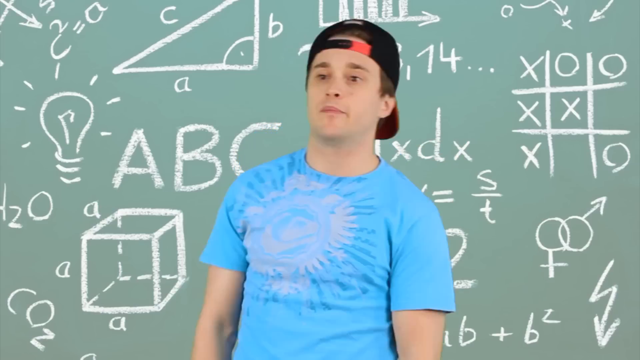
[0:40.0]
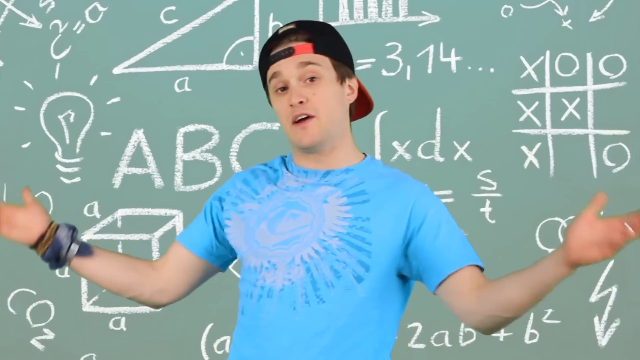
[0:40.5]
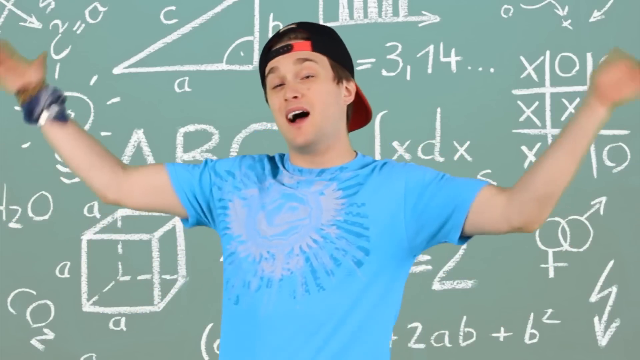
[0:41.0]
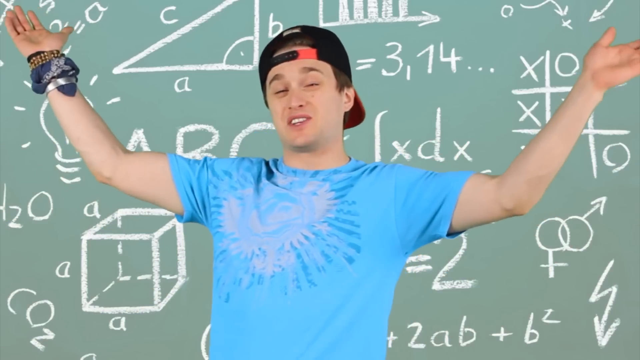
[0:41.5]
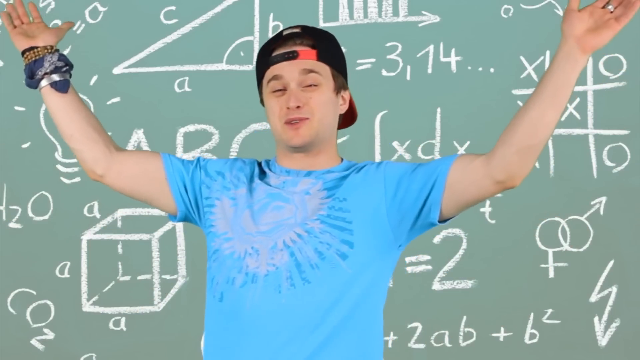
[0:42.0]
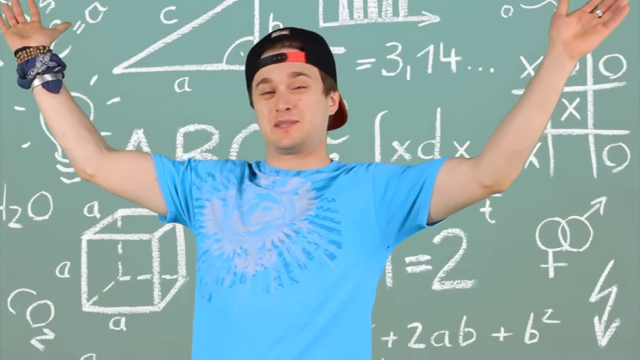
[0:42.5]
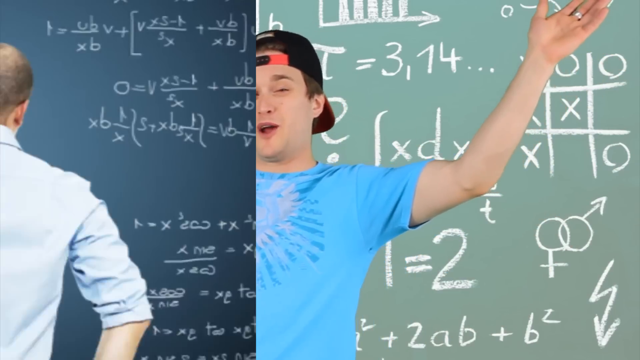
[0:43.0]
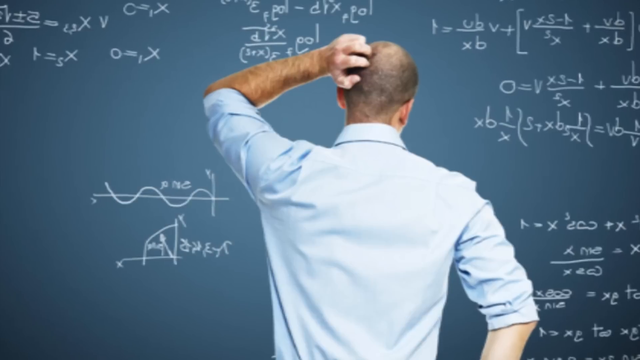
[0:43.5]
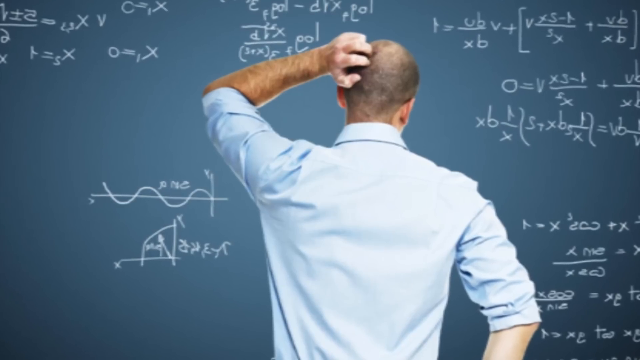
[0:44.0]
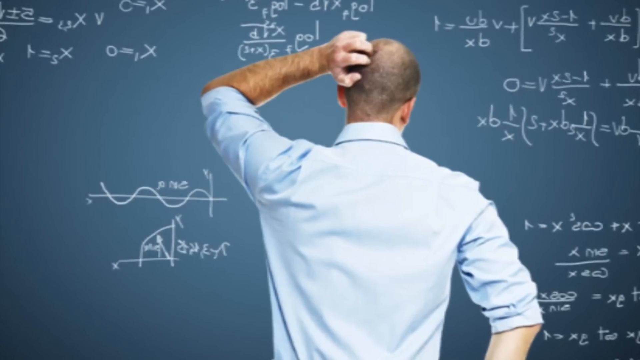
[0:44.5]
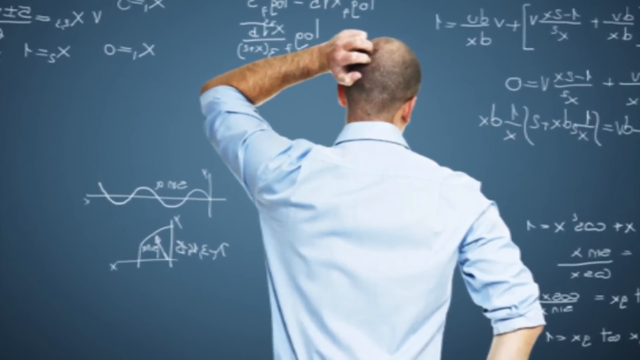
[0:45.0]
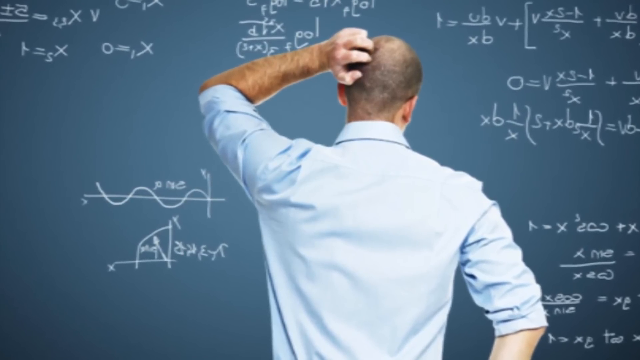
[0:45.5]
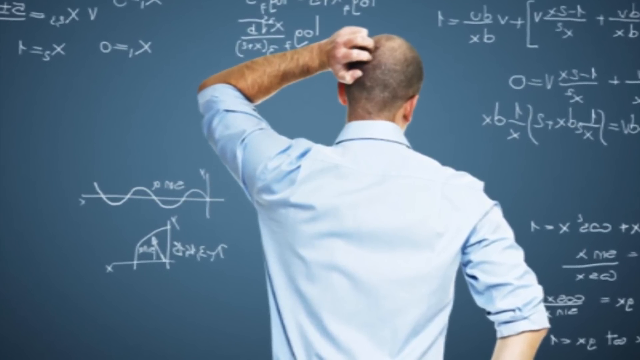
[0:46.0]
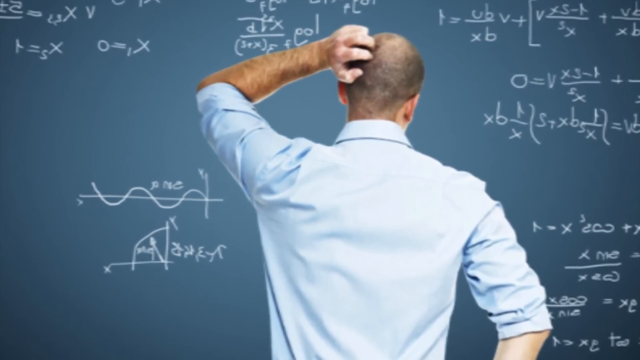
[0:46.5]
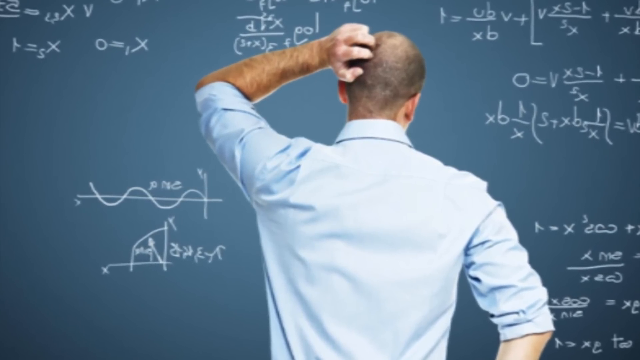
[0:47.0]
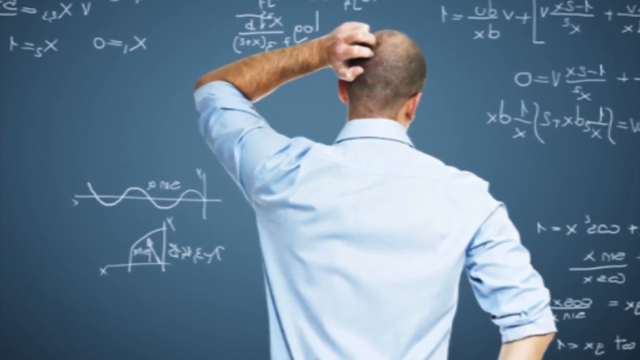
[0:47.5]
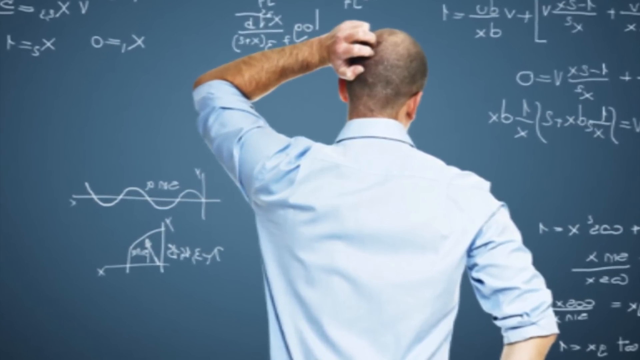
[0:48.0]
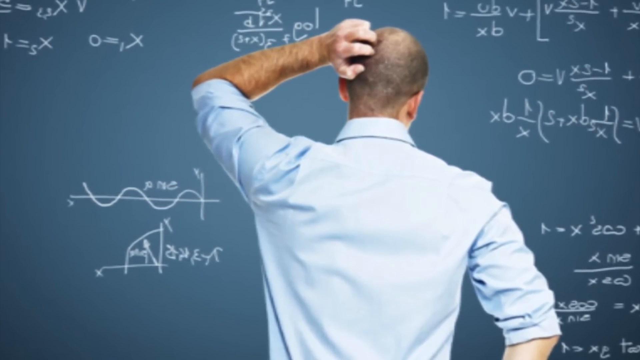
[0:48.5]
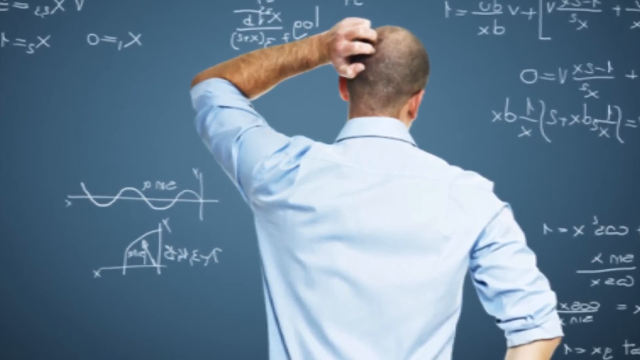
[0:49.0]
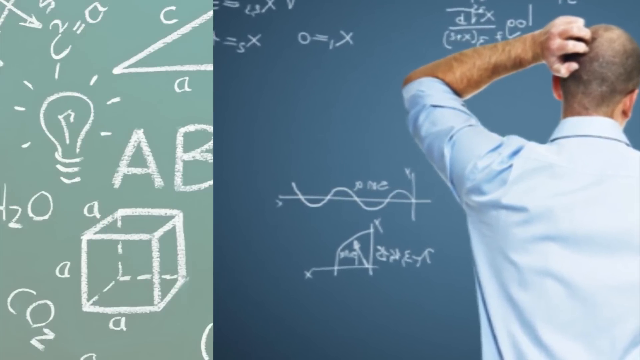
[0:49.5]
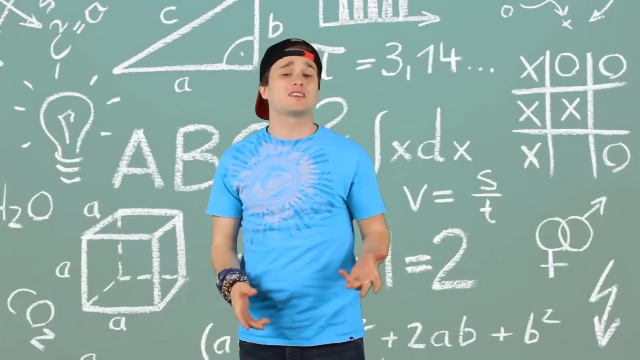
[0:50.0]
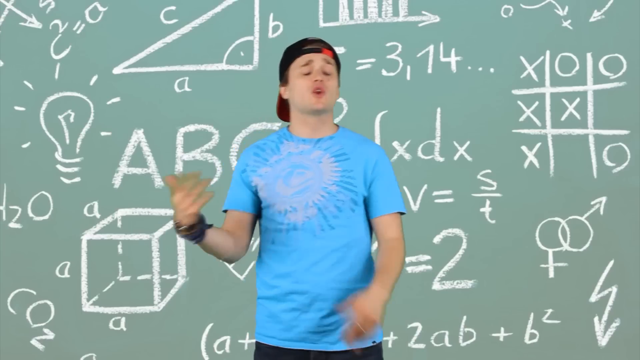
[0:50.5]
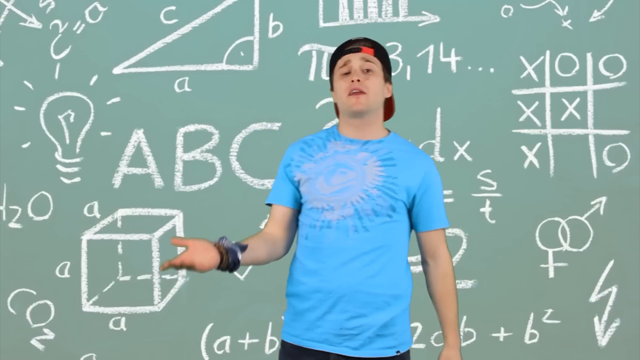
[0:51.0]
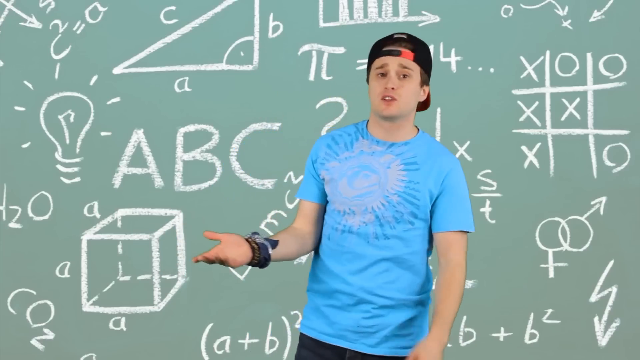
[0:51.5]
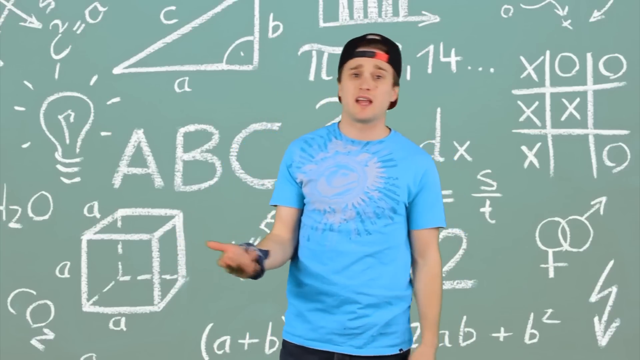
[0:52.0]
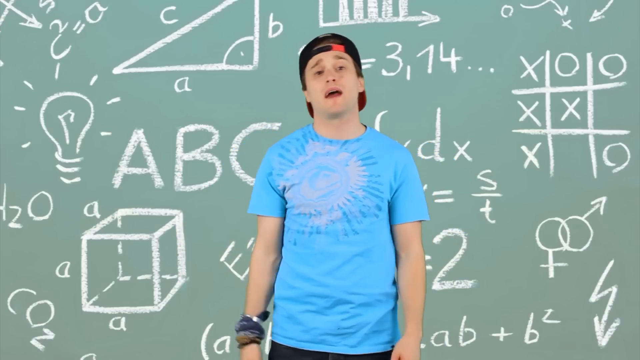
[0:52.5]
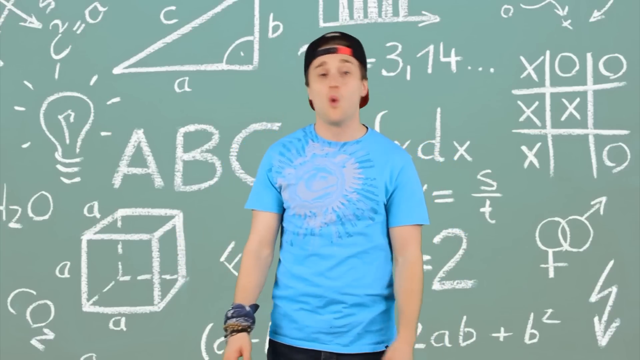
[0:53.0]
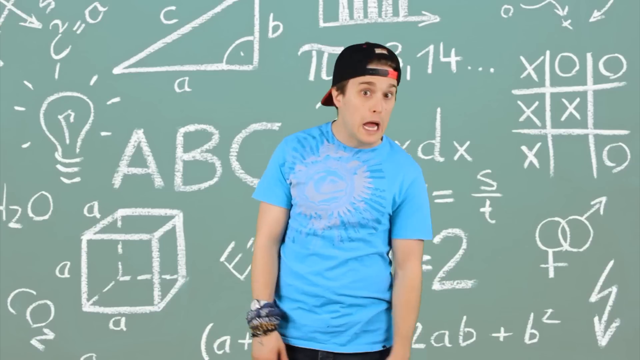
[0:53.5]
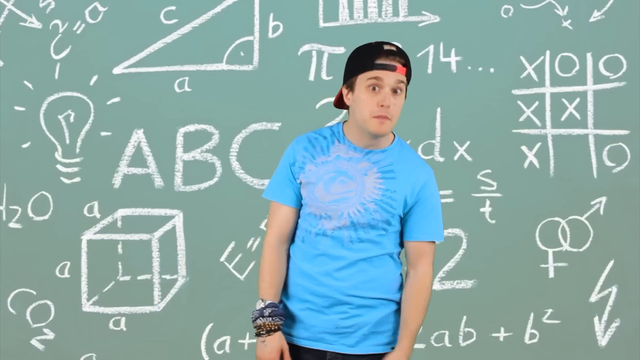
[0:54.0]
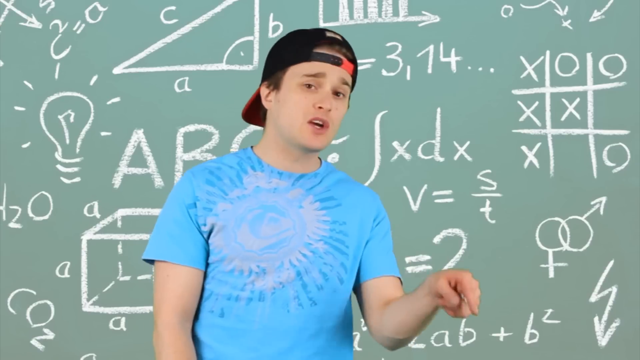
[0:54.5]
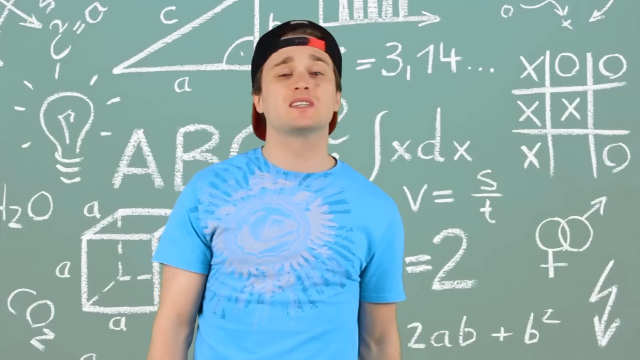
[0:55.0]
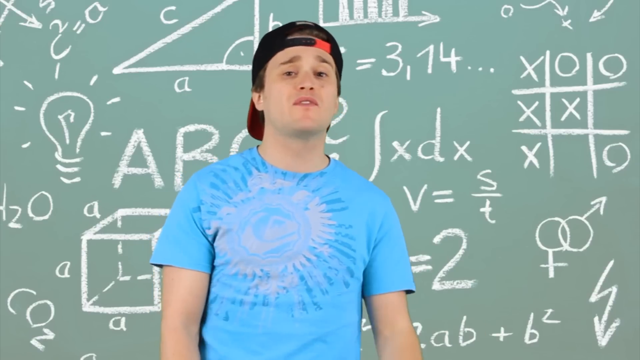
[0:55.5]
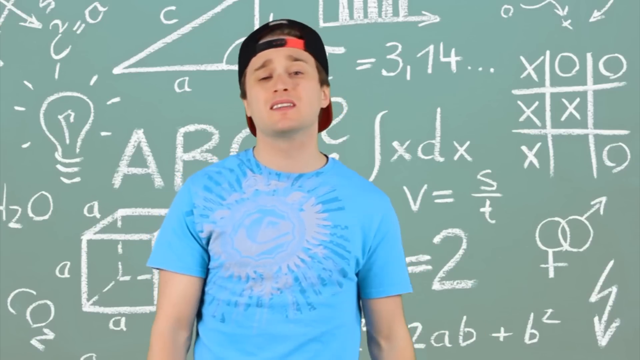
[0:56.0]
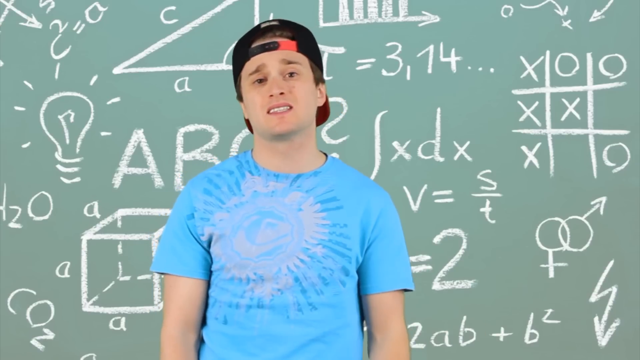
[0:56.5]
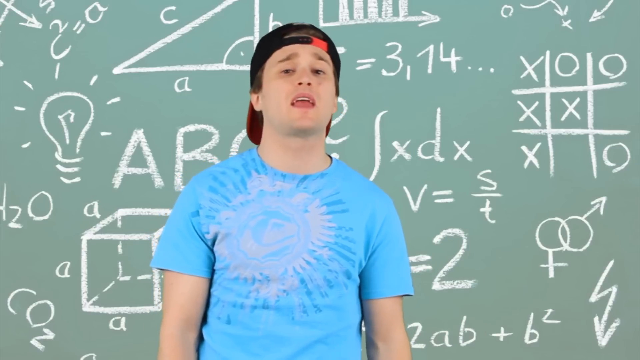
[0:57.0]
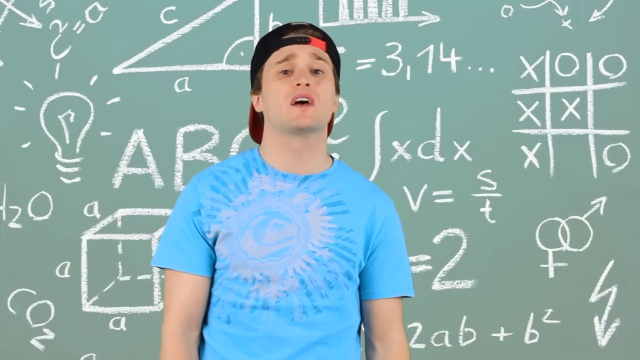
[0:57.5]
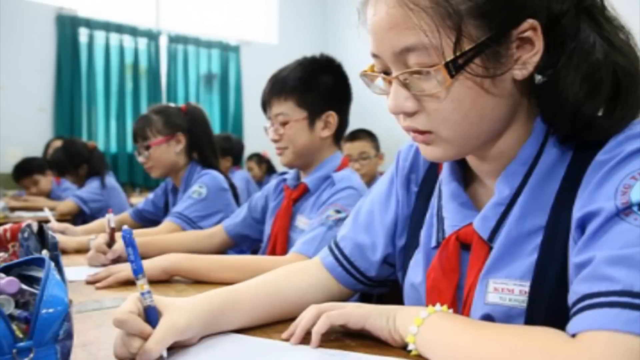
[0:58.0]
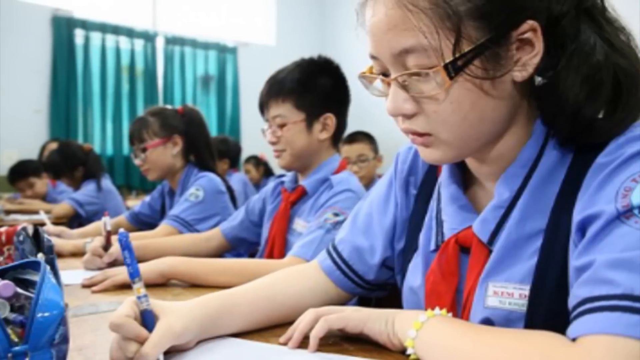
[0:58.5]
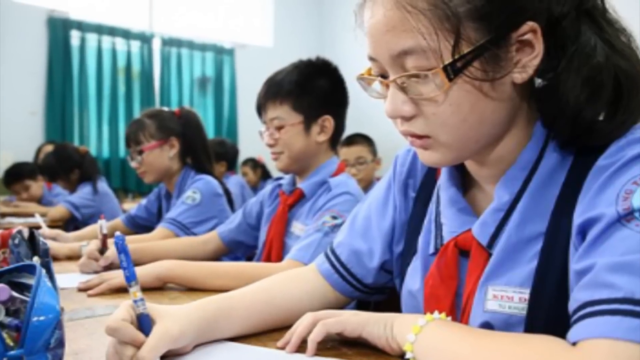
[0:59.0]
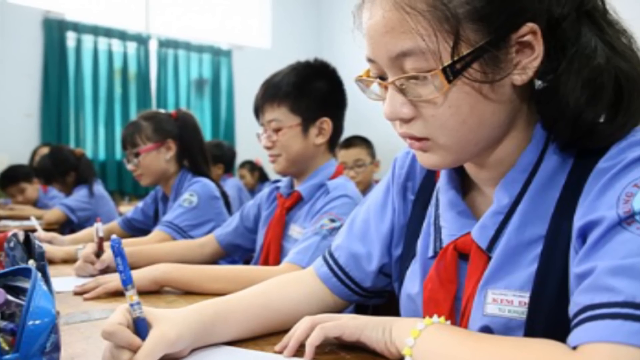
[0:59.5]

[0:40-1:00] The young man stares, then talks to the camera, waving his hands in the air and gesticulating. The video returns to the image of a man scratching his head; this is a different man, who looks like a teacher. He is at his wits' end, staring at some equations on the board, and the camera slowly zooms toward him. It cuts back to the man in the blue t-shirt, giving more facial expression and attitude as he talks to the camera. Then it cuts to a classroom of Asian children wearing school uniforms, with a slow zoom in.